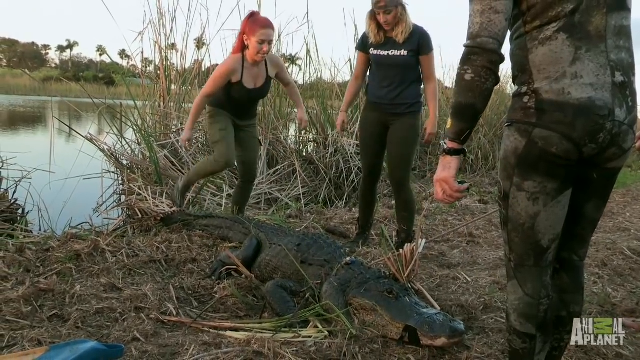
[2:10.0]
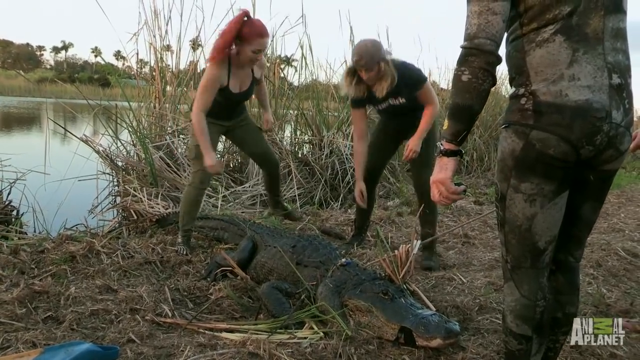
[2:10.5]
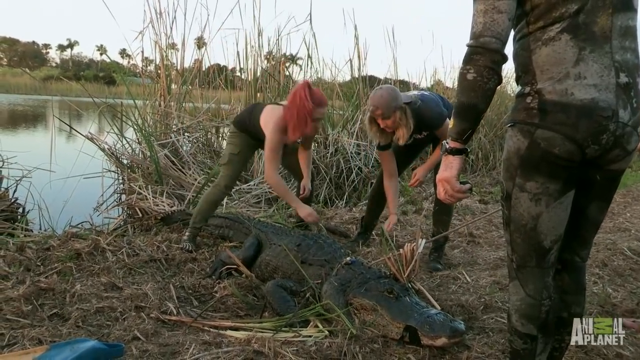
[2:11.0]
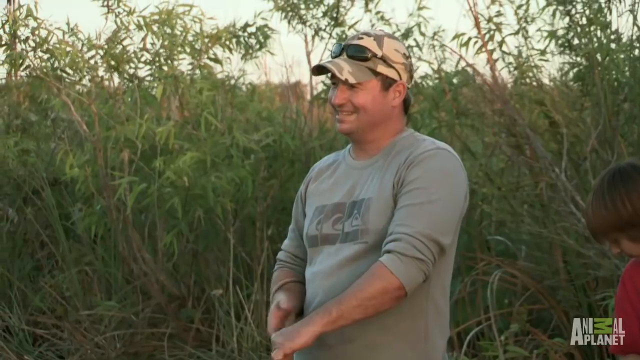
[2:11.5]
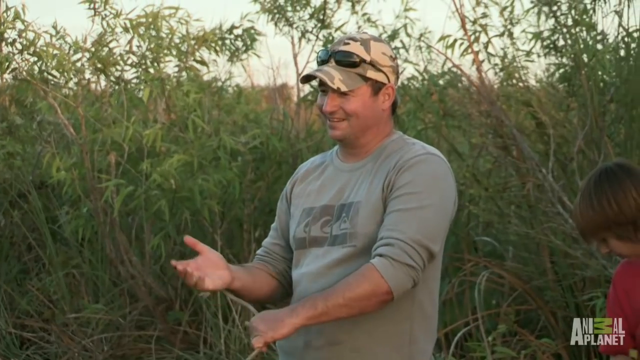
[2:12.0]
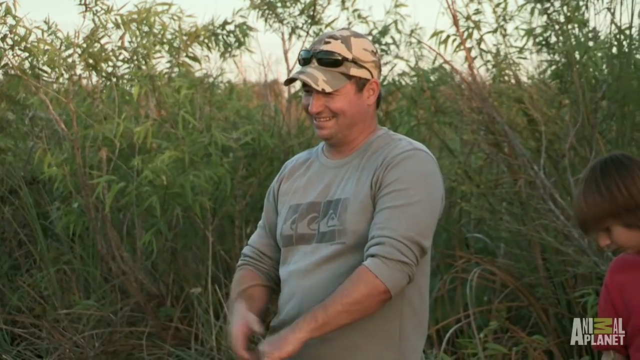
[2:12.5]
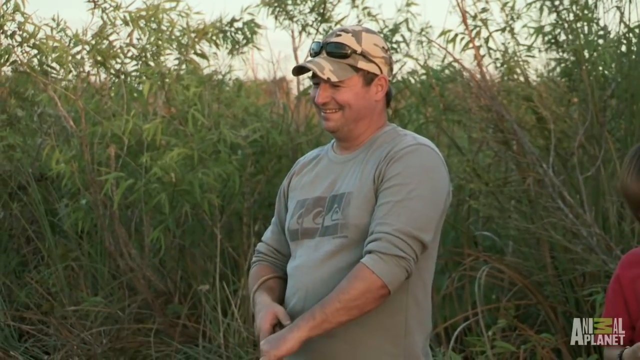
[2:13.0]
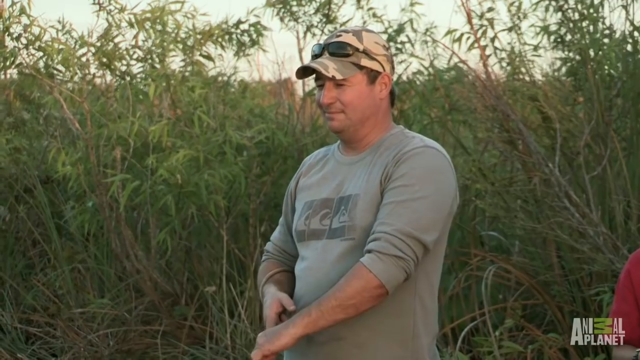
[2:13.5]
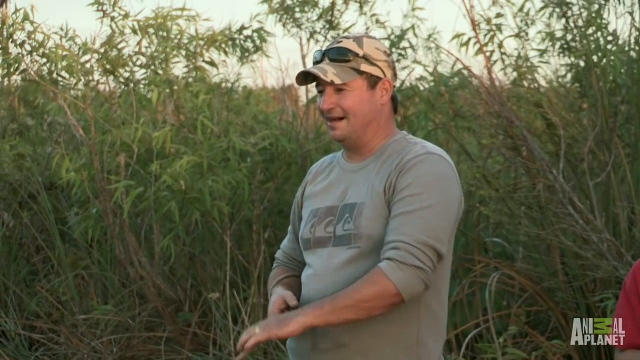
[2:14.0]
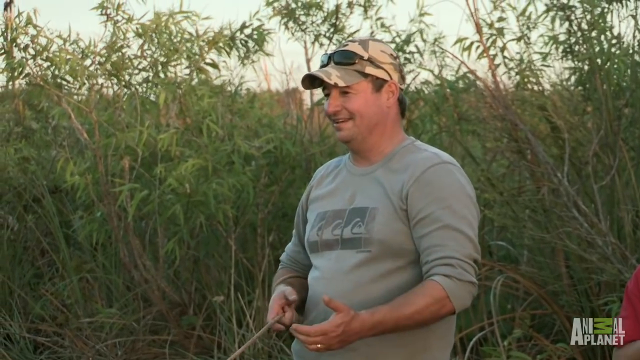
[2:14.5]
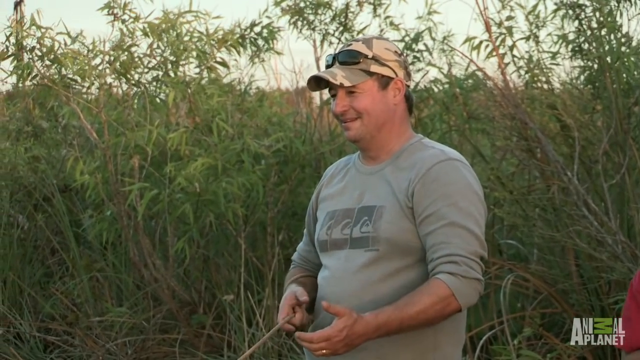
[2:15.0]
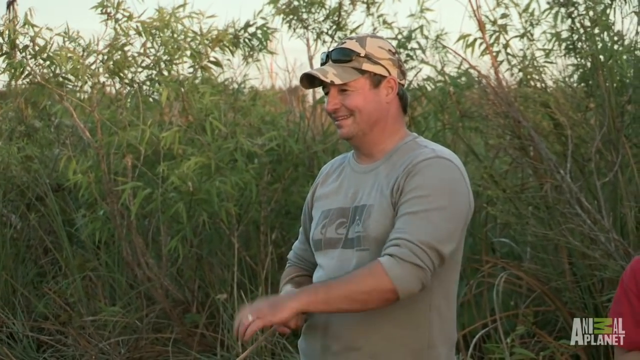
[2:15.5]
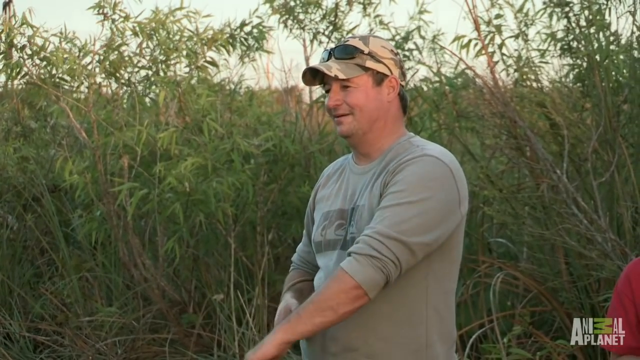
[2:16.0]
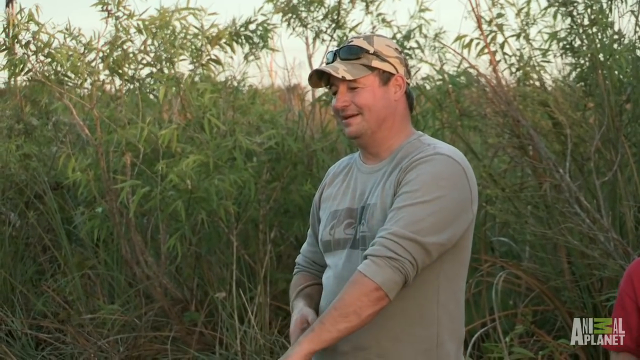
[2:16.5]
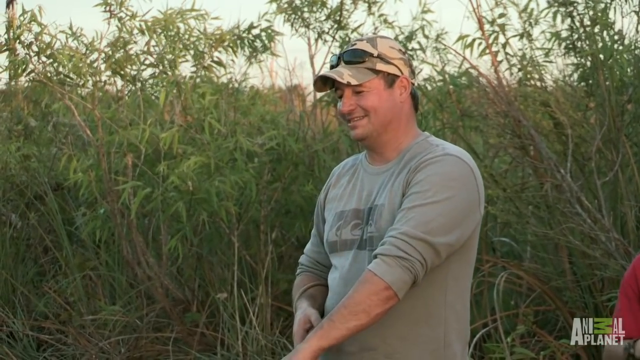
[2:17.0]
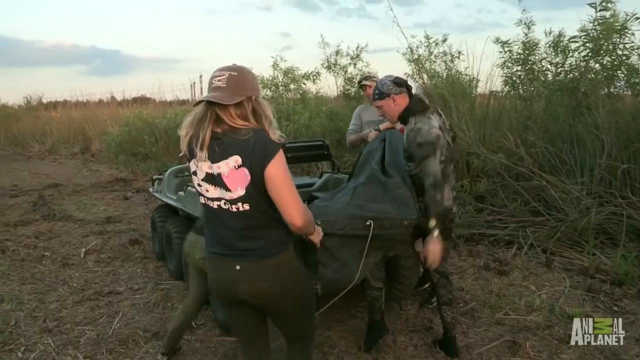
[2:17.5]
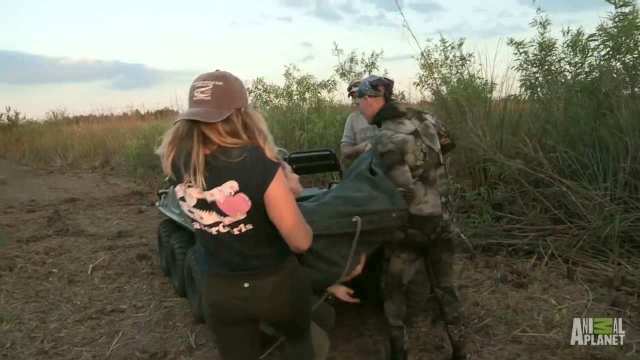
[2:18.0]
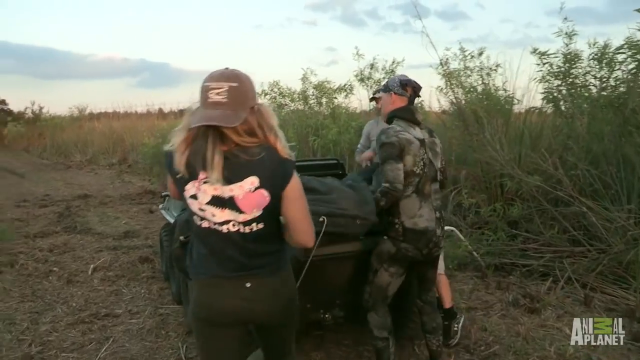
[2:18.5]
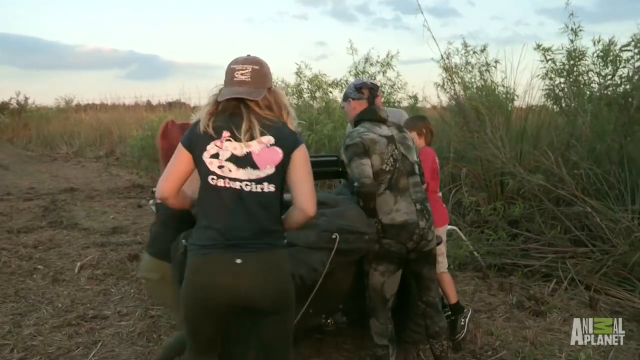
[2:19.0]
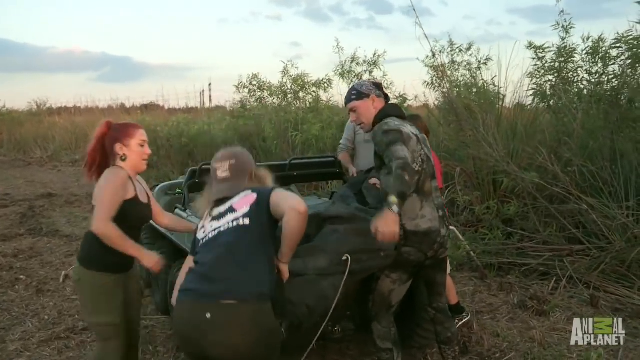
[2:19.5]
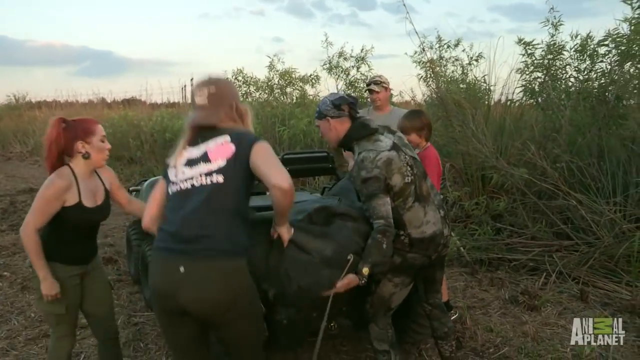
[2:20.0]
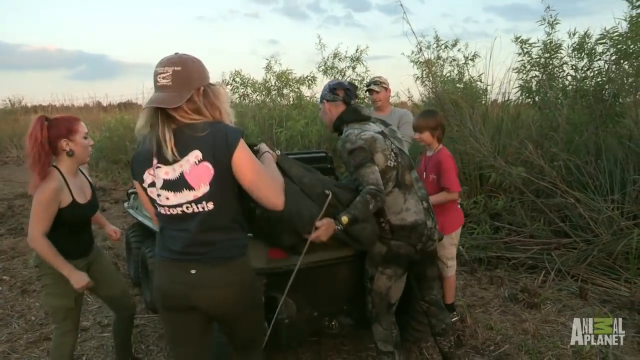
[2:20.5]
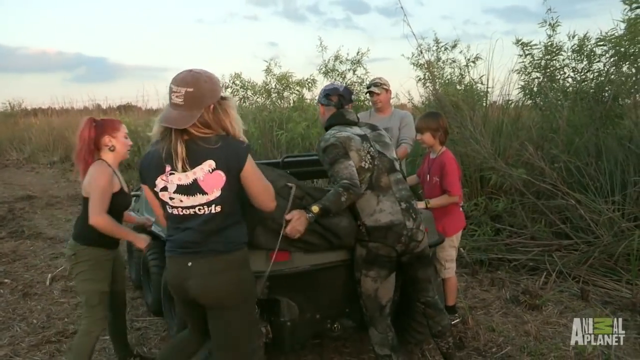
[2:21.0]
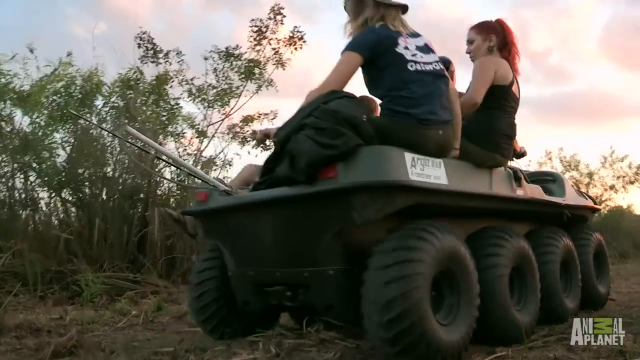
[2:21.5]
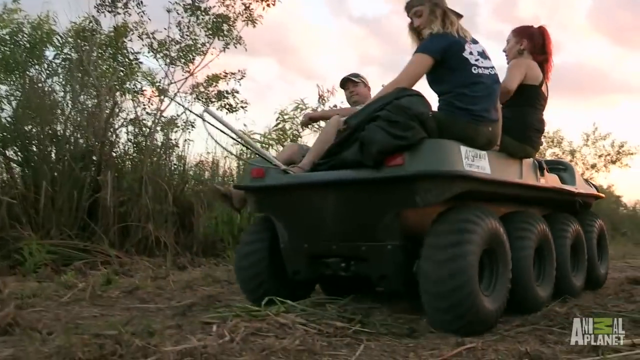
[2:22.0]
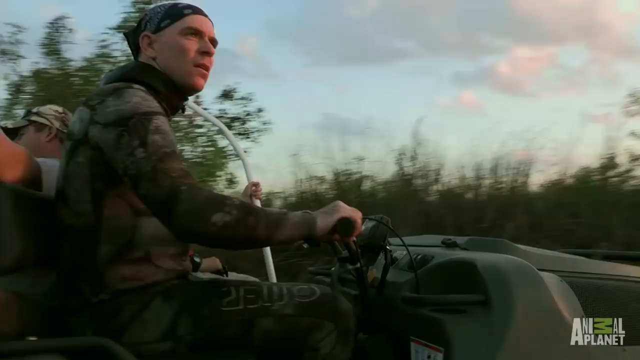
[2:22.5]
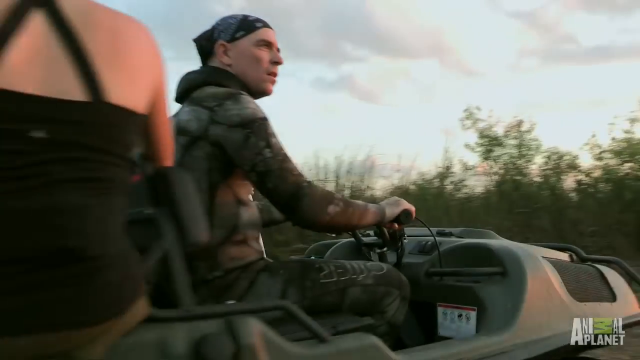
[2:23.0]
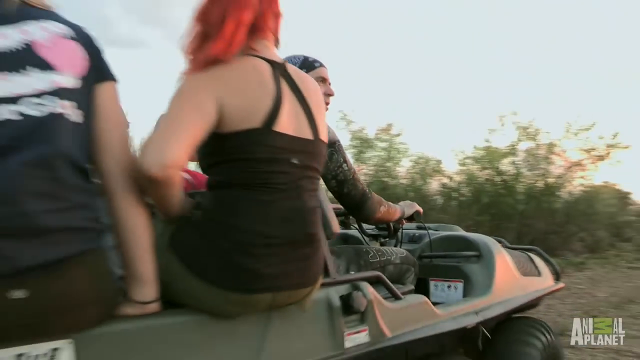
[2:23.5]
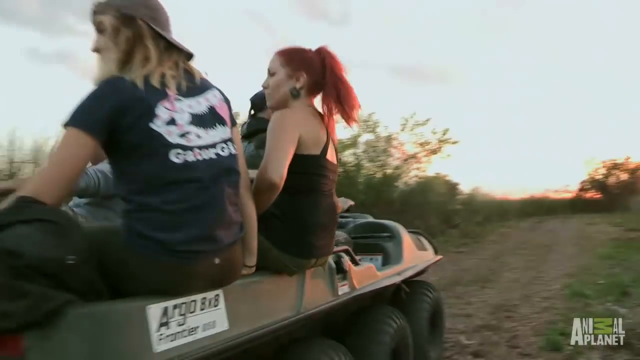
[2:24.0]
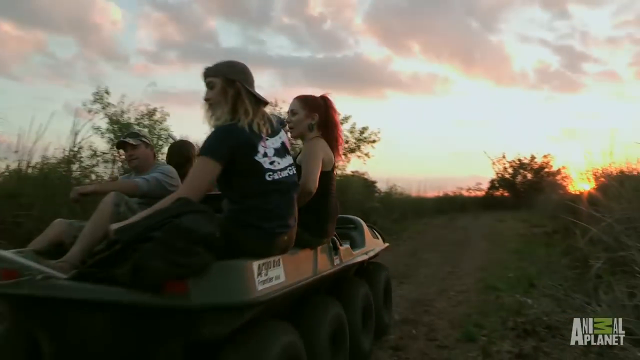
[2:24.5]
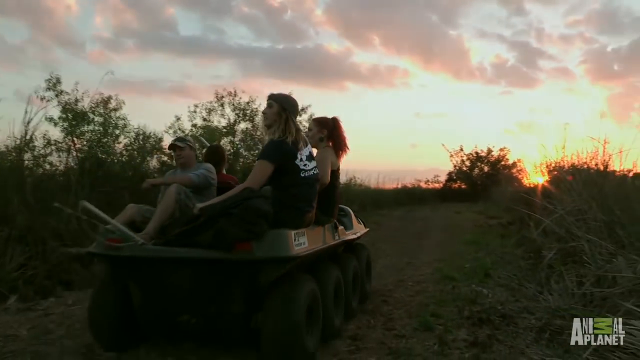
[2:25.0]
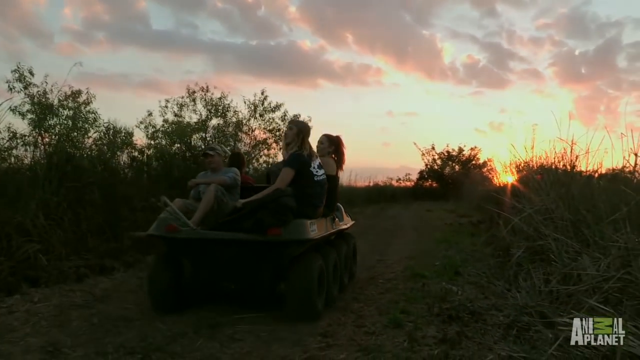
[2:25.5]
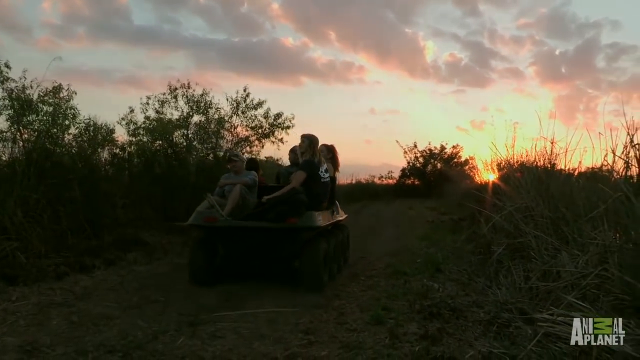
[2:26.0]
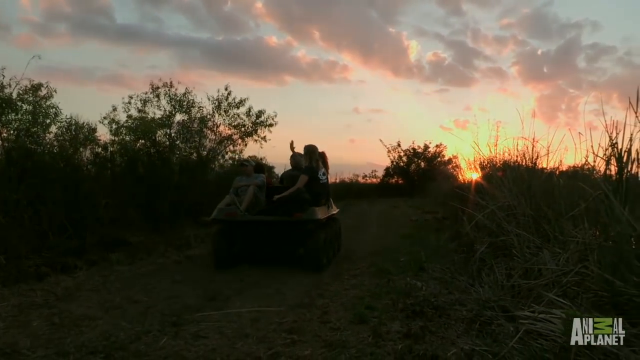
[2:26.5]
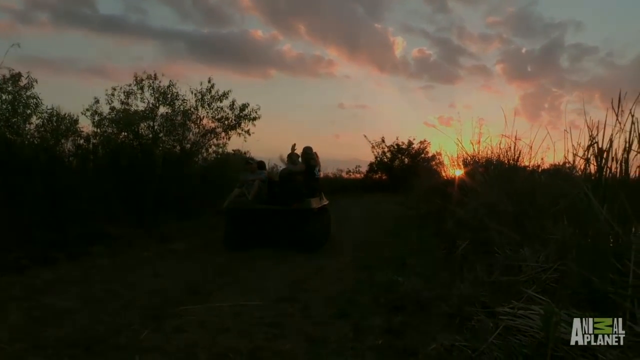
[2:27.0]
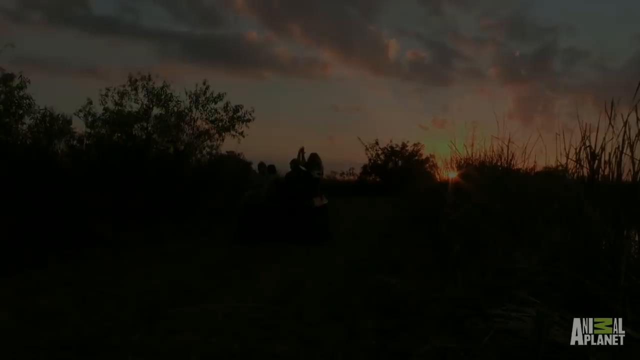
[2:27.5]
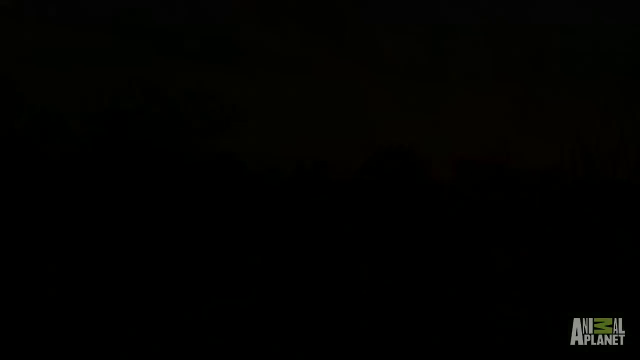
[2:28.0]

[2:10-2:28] The alligator appears to have been secured and tied up many times; it lays still, flat on its stomach on the ground. The scene seems to switch to show the alligator's mouth taped shut, with the two women standing over the alligator and the man in the wetsuit standing over its front. The man in the long-sleeved gray shirt smiles and gestures; they appear happy to have caught the alligator. They then appear to be loading the alligator, which seems to have been bagged in a black body bag, onto the ATV. The ATV drives off with the man in the wetsuit driving, two women in the back, the man sitting on the left, and what appears to be the alligator as cargo between them.